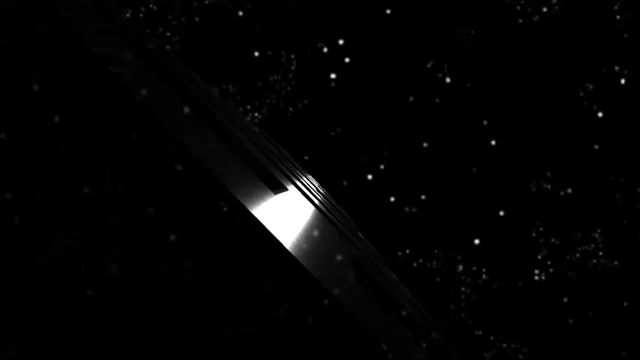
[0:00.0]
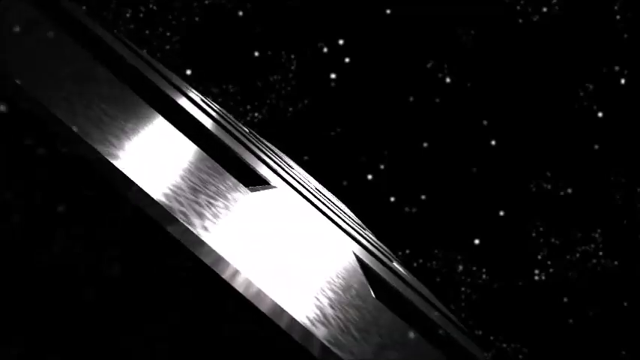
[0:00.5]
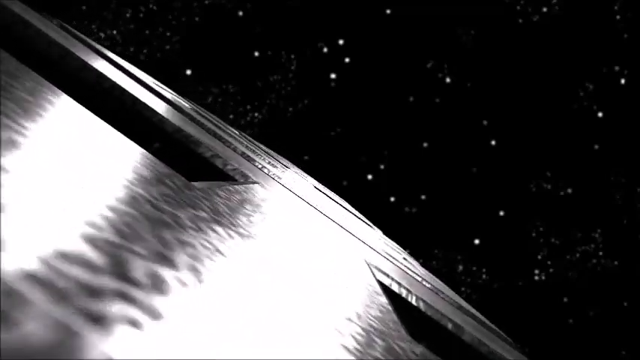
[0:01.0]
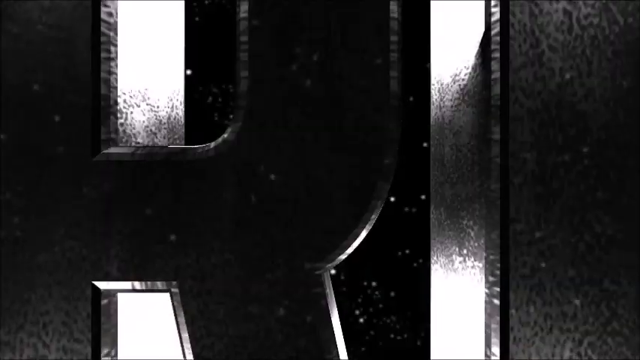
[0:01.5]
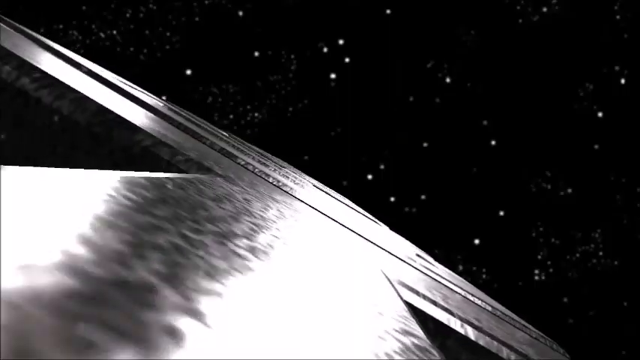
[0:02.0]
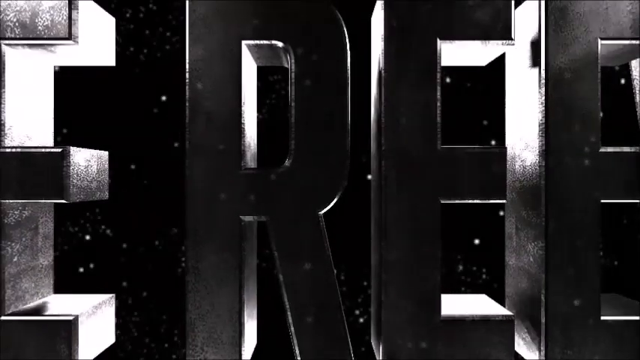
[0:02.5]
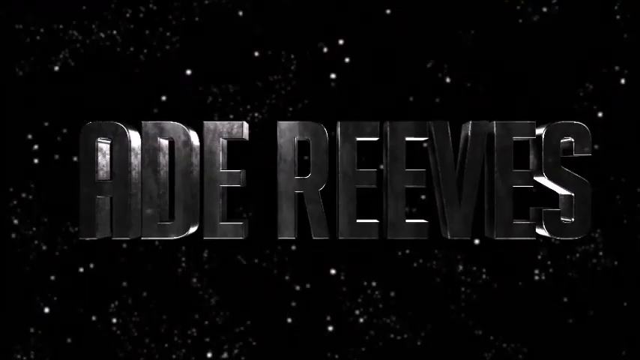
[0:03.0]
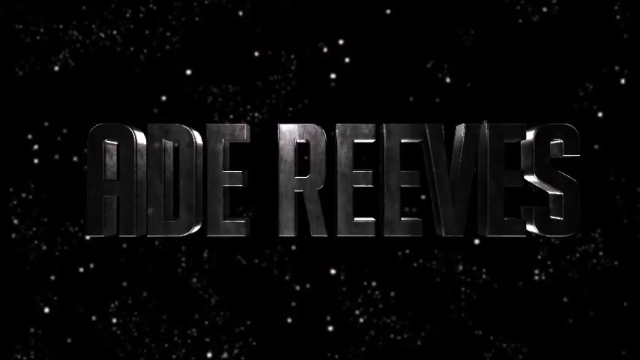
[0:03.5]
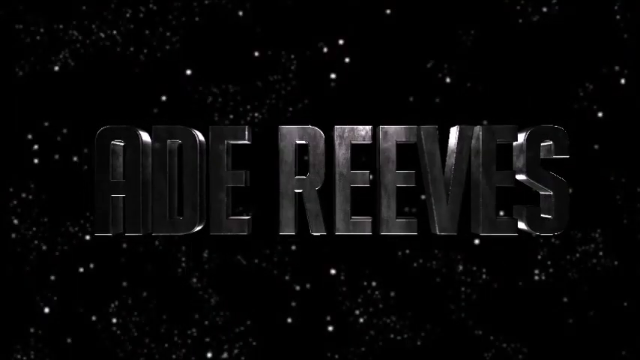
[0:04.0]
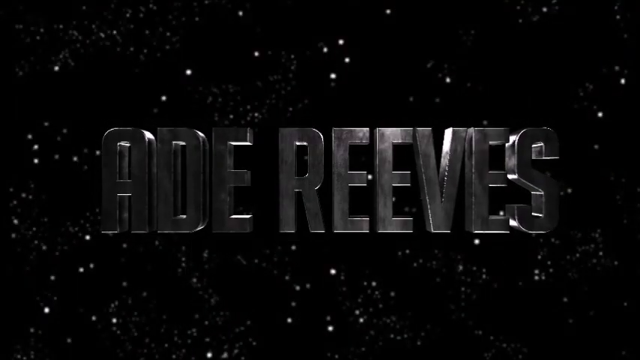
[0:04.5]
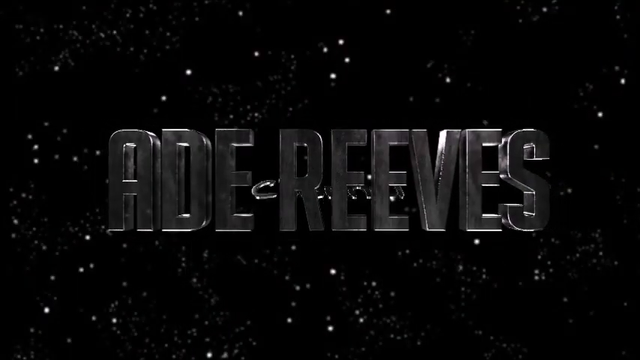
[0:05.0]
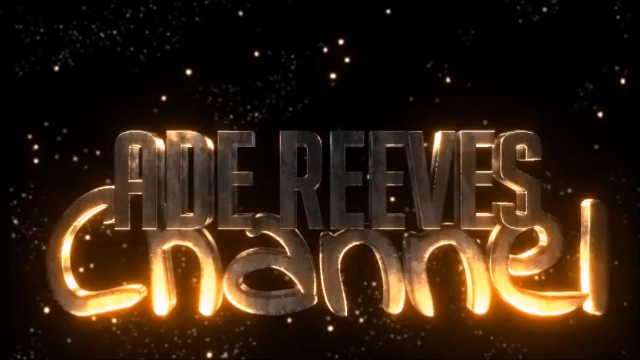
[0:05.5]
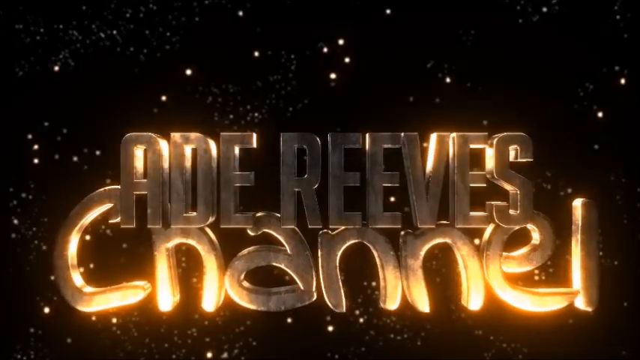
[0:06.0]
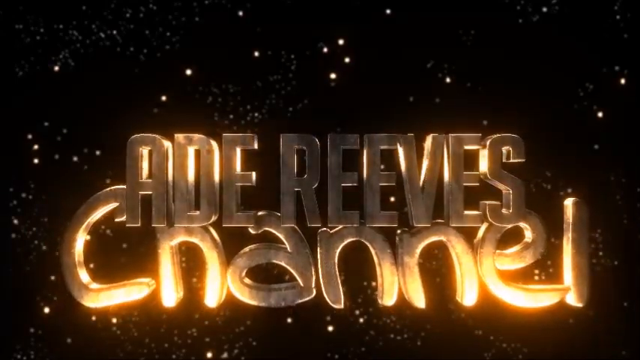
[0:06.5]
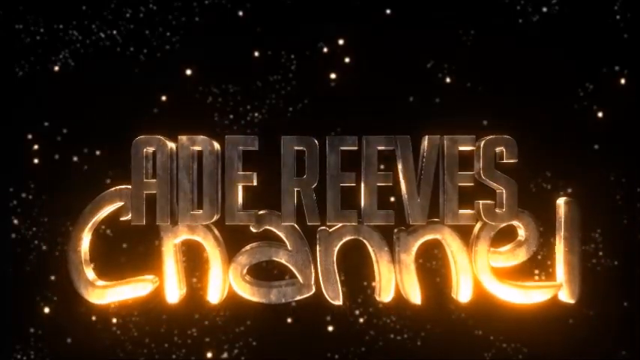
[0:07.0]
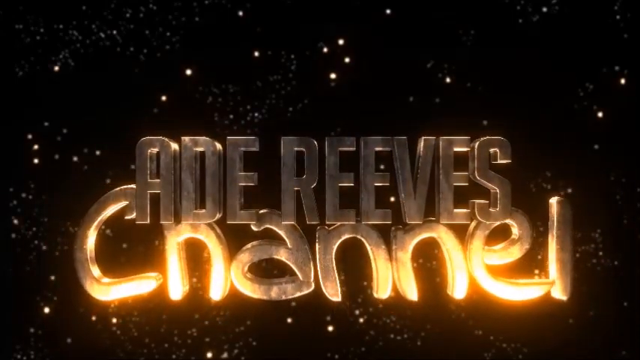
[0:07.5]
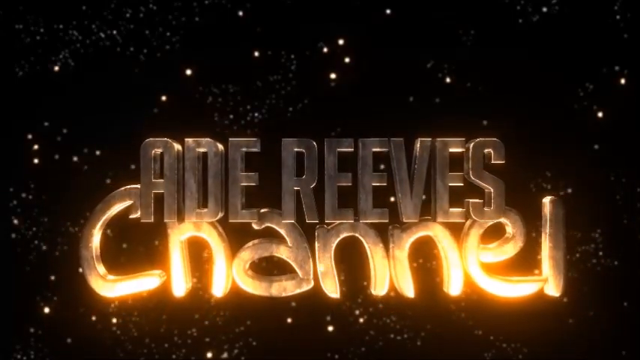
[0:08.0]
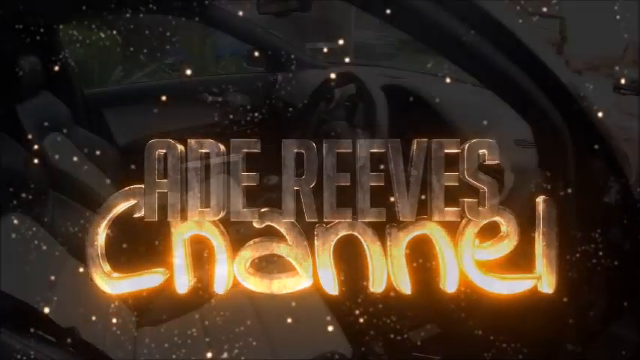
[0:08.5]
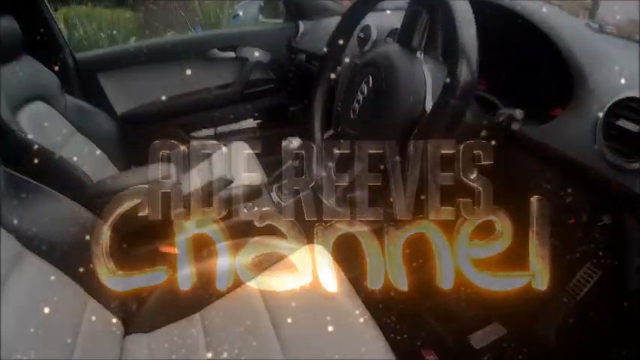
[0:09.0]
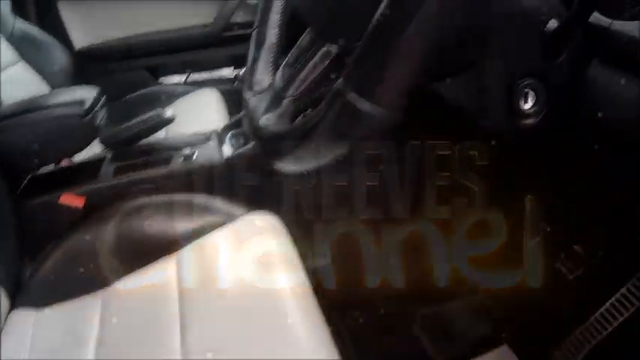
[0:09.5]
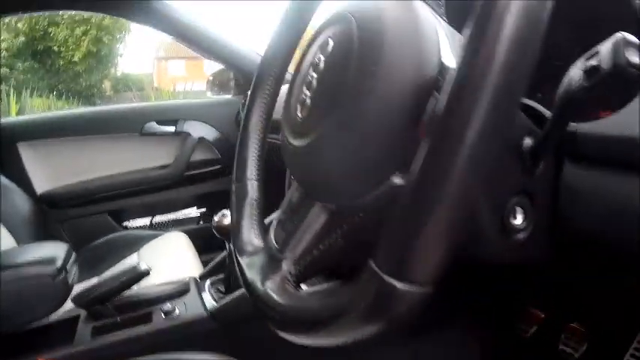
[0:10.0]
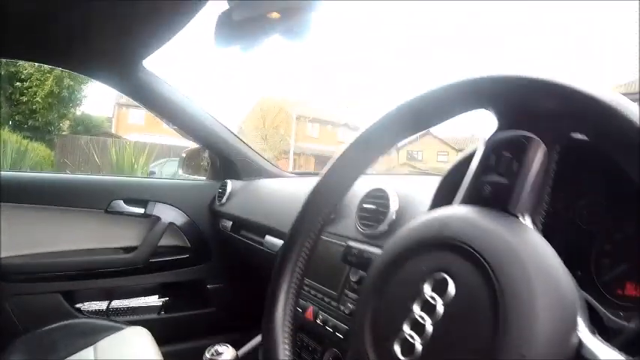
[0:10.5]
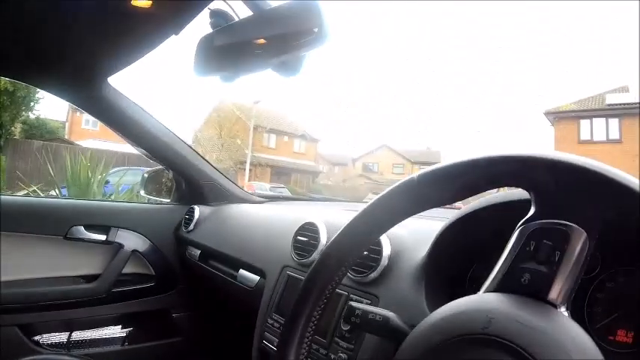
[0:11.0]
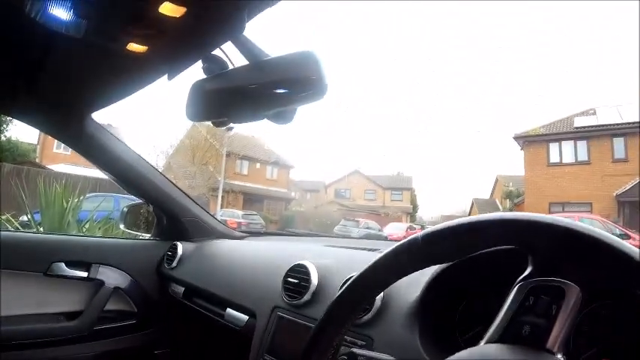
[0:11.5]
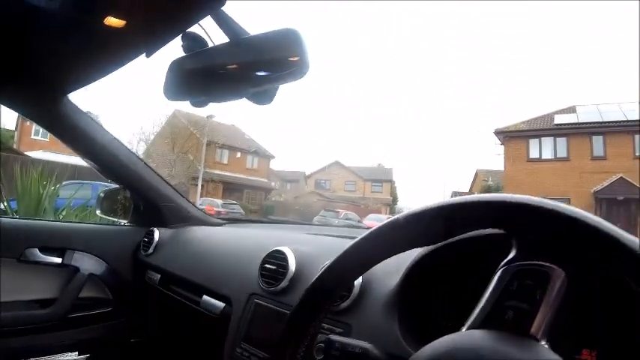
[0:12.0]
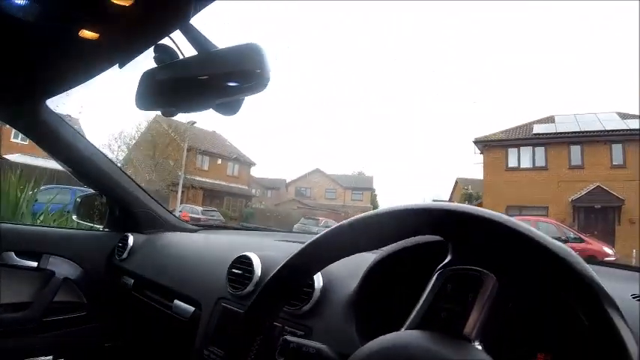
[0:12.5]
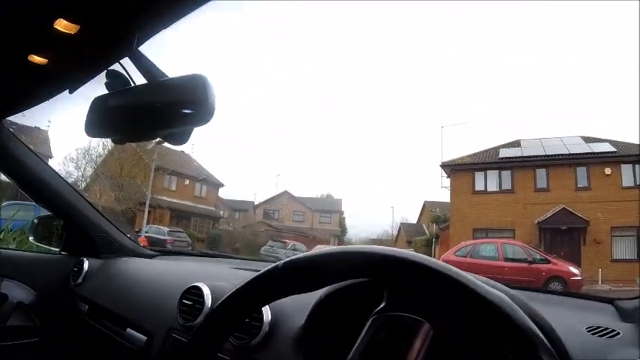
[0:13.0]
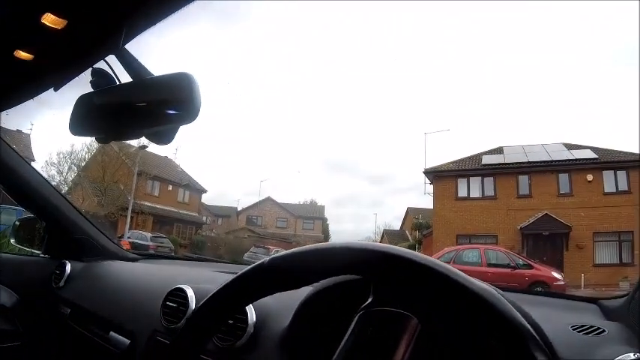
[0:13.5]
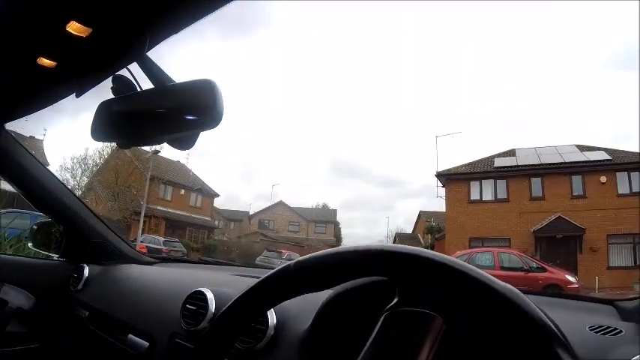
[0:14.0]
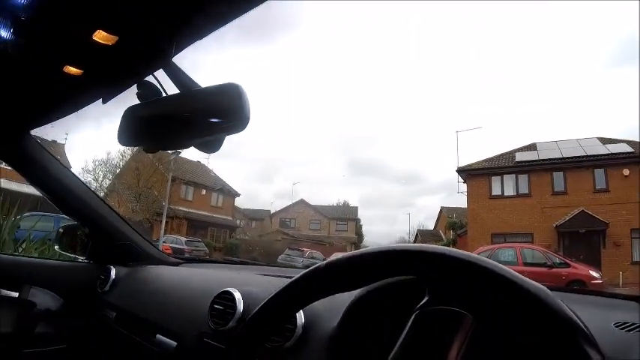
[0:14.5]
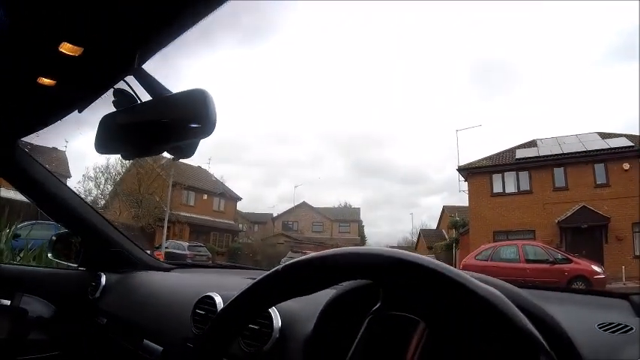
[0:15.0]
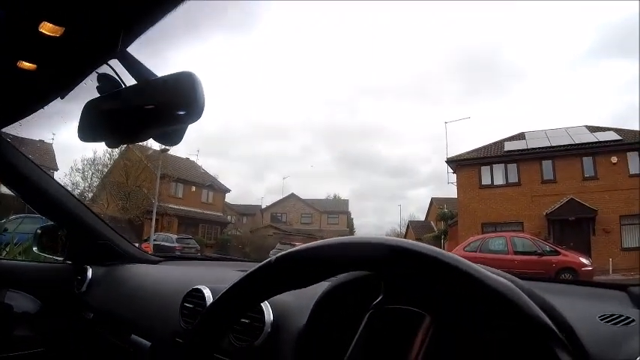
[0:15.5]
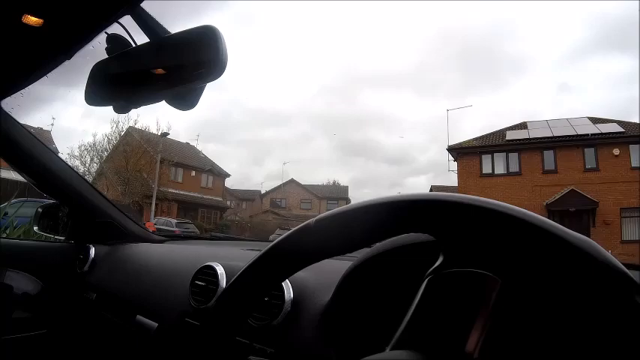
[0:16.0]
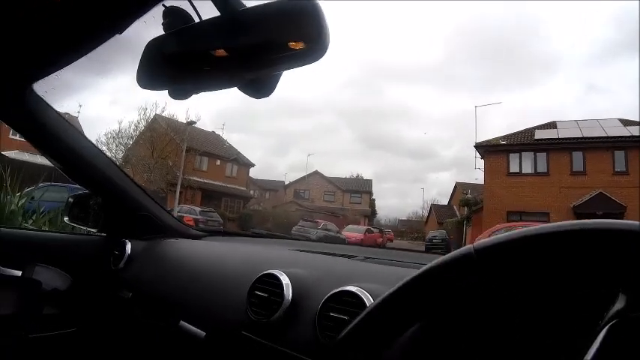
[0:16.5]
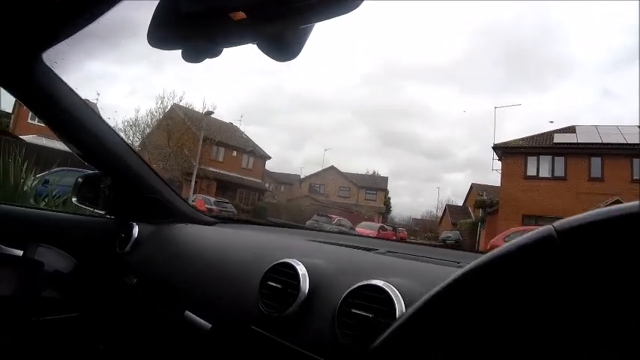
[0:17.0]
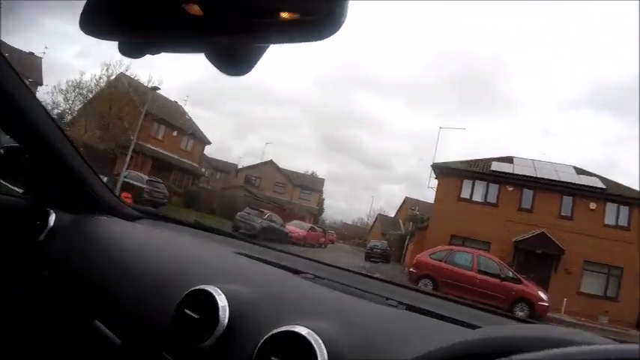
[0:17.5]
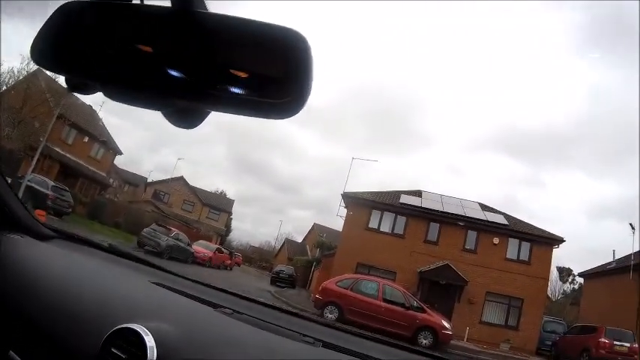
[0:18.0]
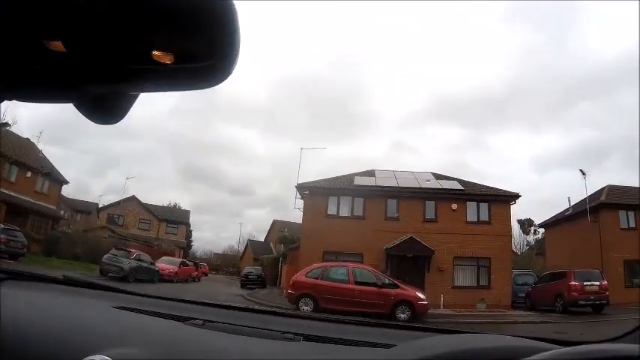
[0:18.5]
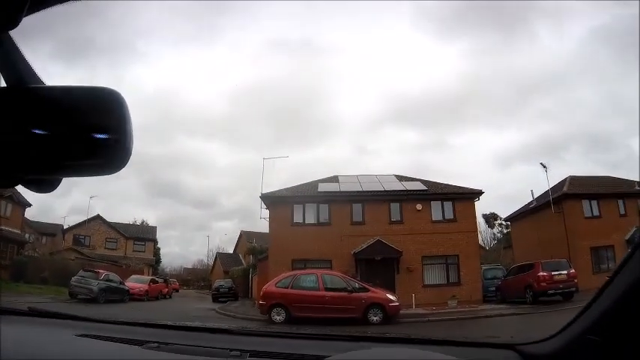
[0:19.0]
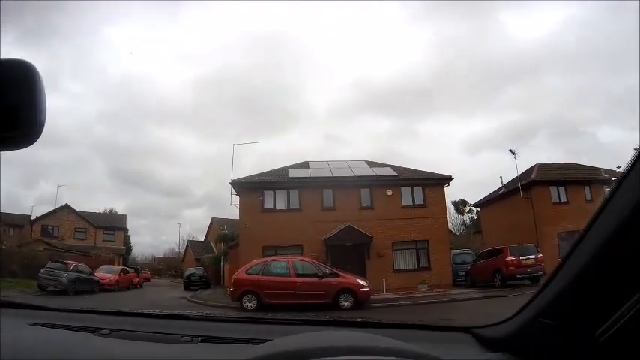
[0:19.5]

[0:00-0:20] The video opens on a night sky or outer space that is almost entirely black, with many dots of stars. Three-dimensional, metallic-looking words appear on the screen, apparently a name: "Ade Reeves", all in capital letters. Suddenly a light, seemingly from below, lights up the metal so it looks bronze-colored, and underneath "Ade Reeves" the word "channel" appears in a different, slightly more whimsical font. The scene suddenly cuts to the inside of a car as the camera pans around. The steering wheel is on the right side, so this may be England or a similar country. The view then looks out from the driver's seat at residential two-story houses, with cars parked in front of the other houses. The camera is somewhat shaky and moving around.